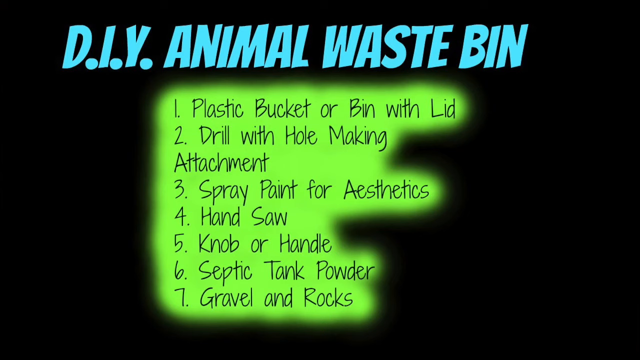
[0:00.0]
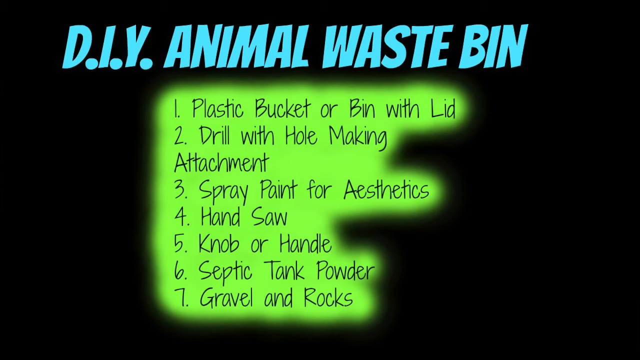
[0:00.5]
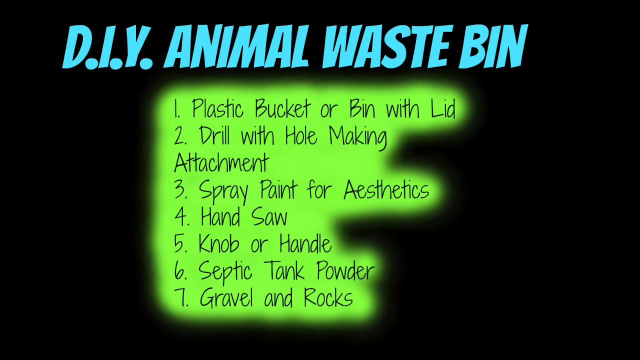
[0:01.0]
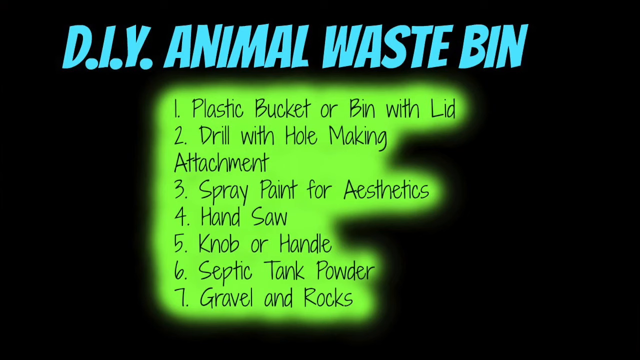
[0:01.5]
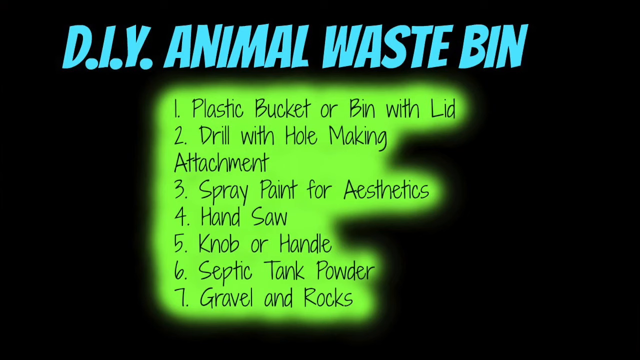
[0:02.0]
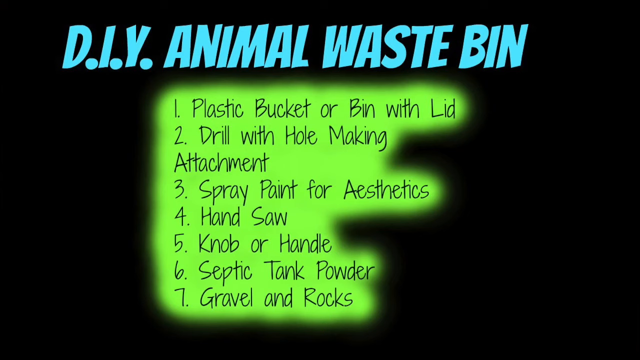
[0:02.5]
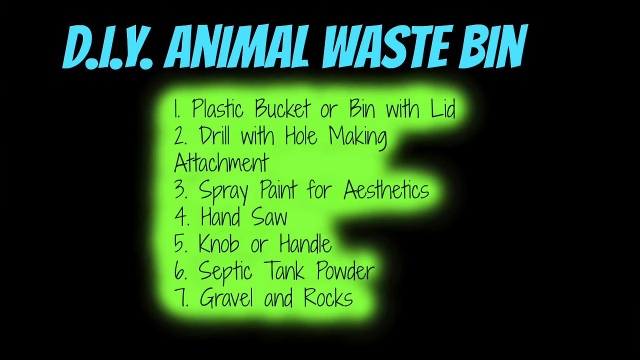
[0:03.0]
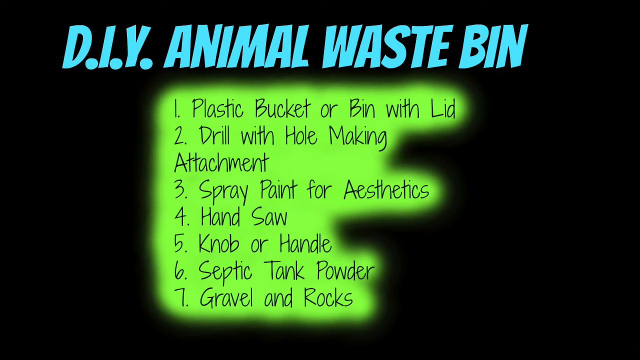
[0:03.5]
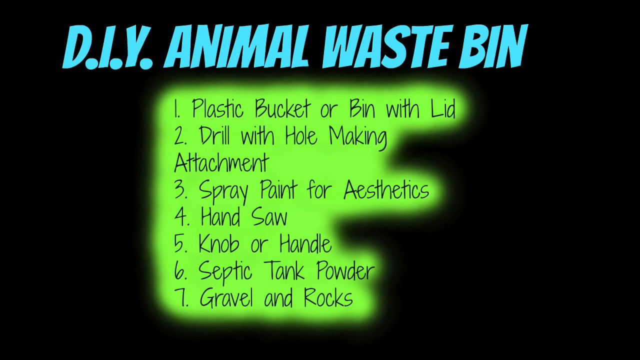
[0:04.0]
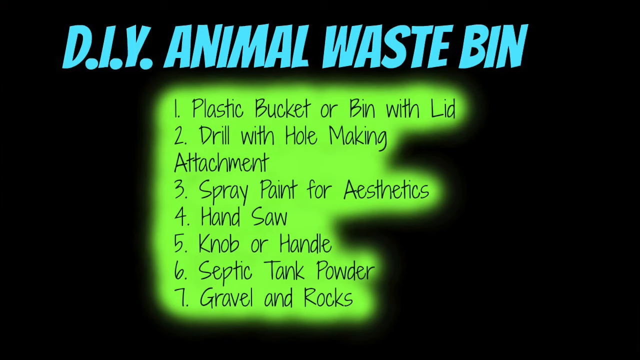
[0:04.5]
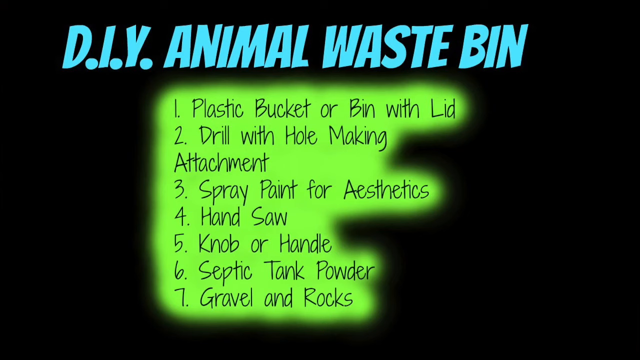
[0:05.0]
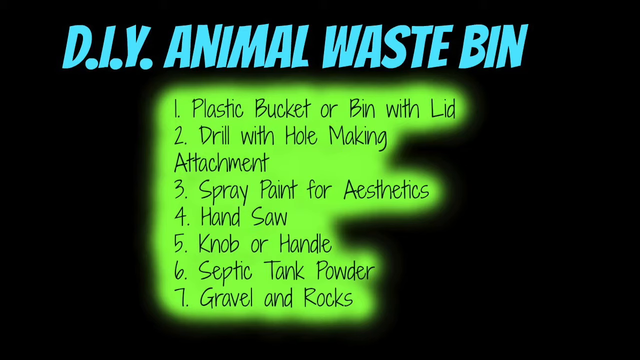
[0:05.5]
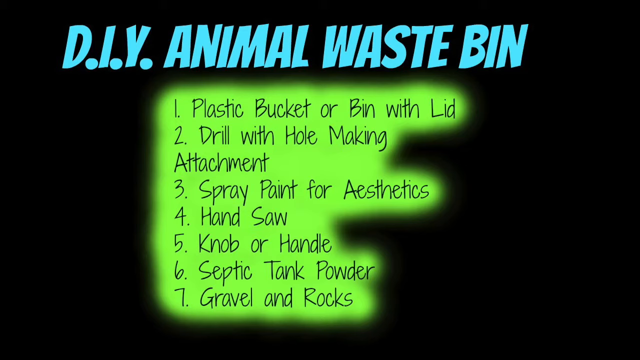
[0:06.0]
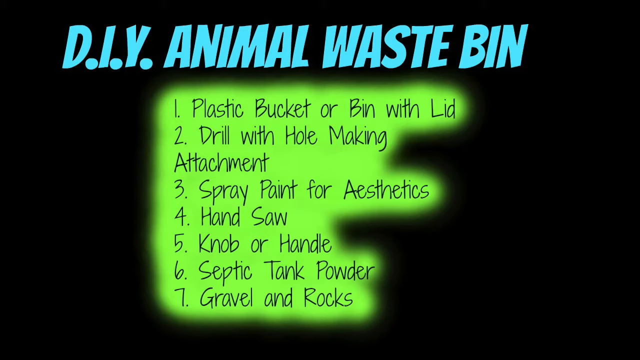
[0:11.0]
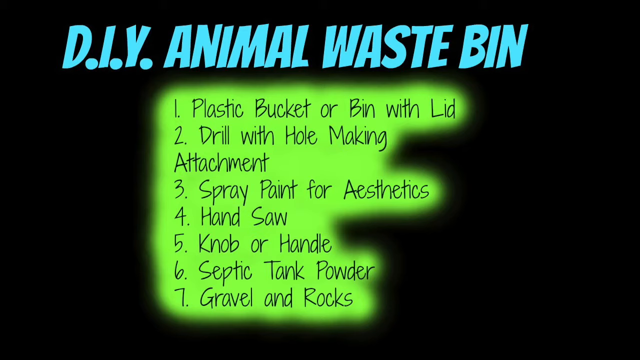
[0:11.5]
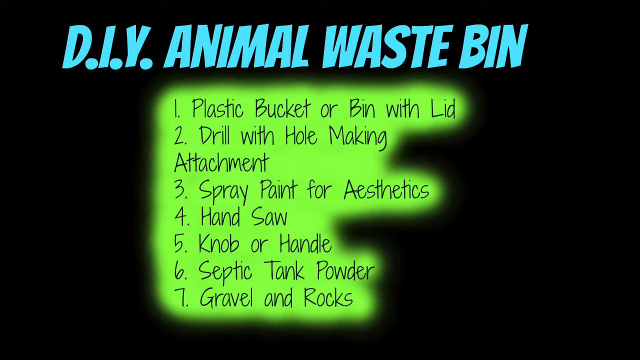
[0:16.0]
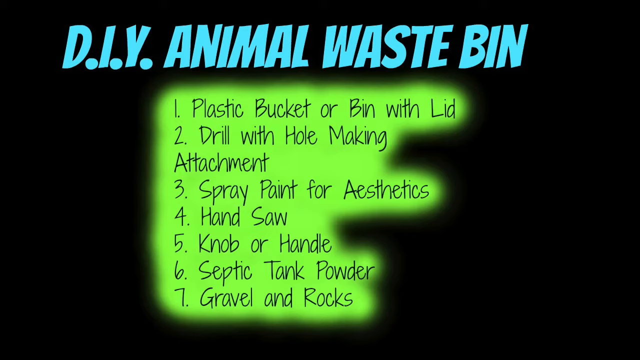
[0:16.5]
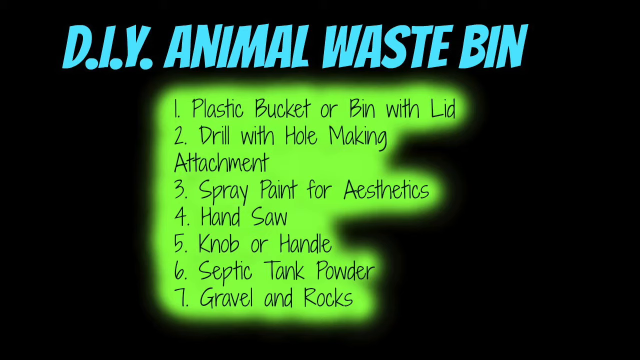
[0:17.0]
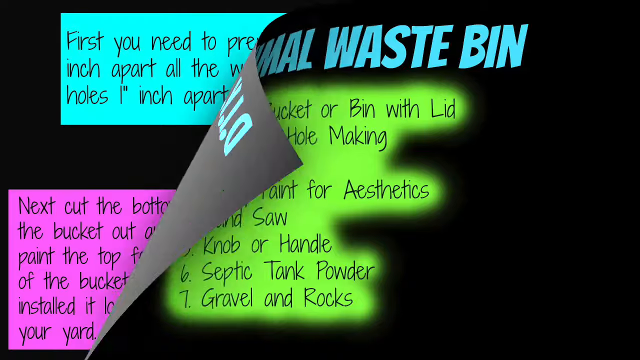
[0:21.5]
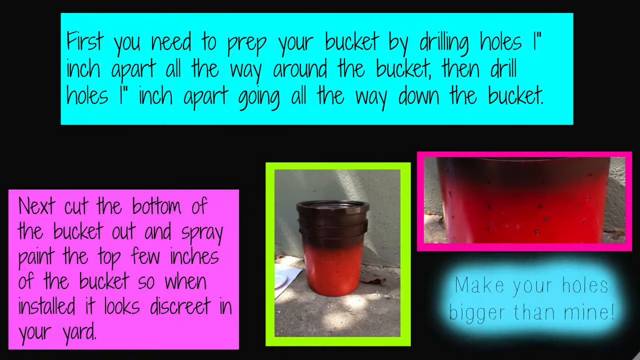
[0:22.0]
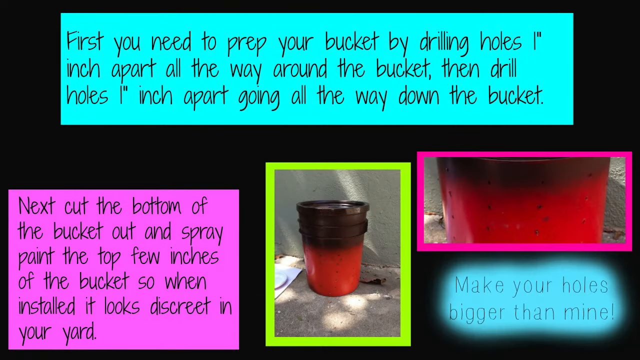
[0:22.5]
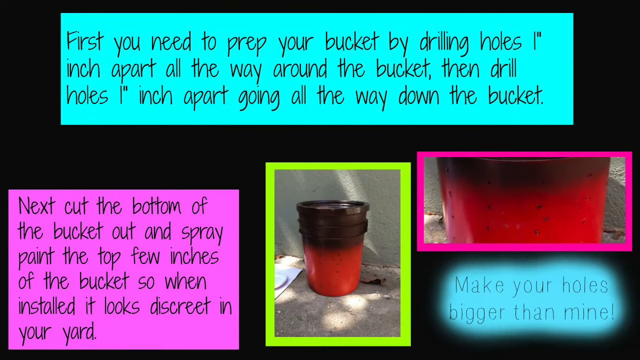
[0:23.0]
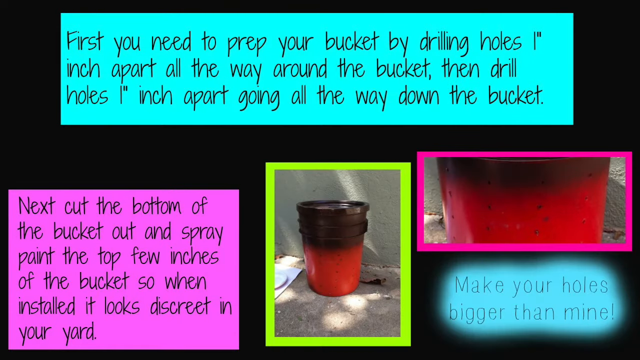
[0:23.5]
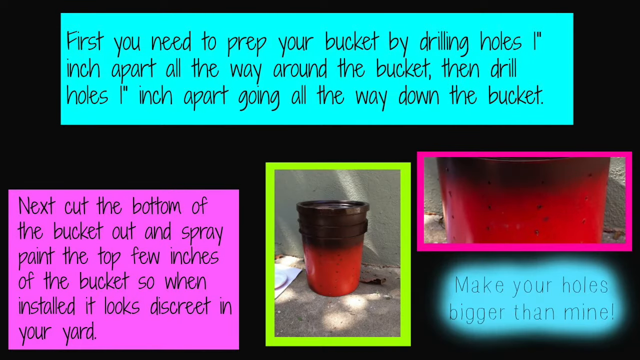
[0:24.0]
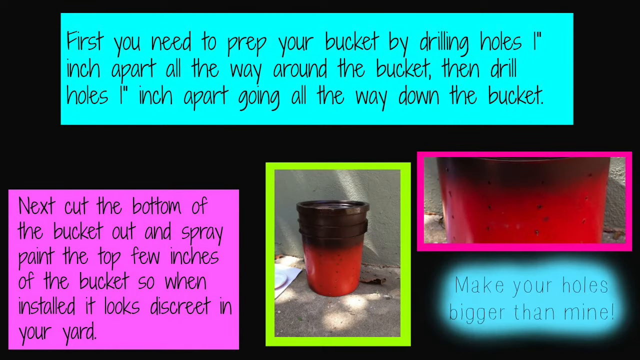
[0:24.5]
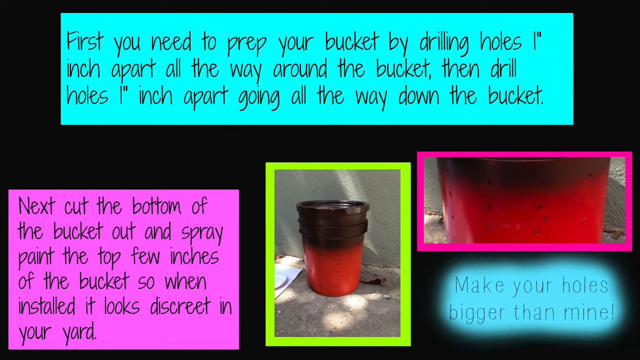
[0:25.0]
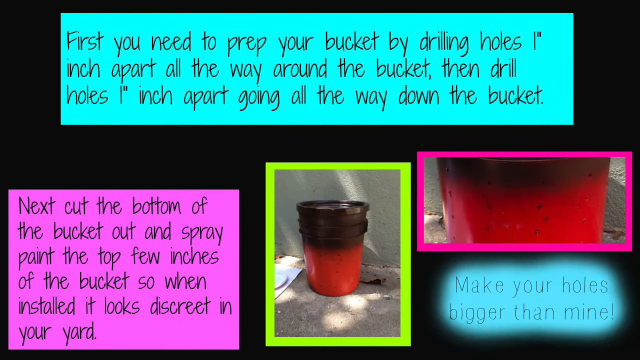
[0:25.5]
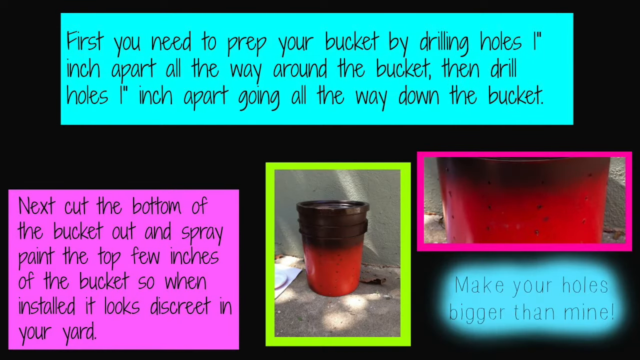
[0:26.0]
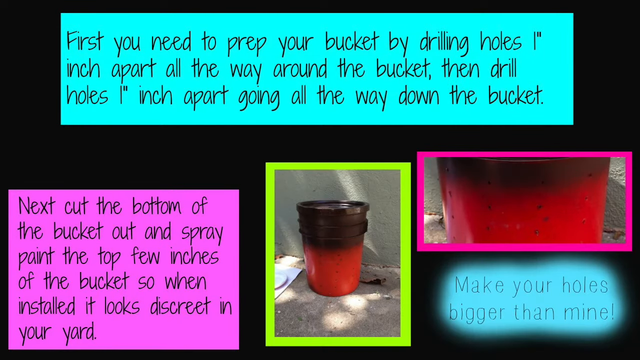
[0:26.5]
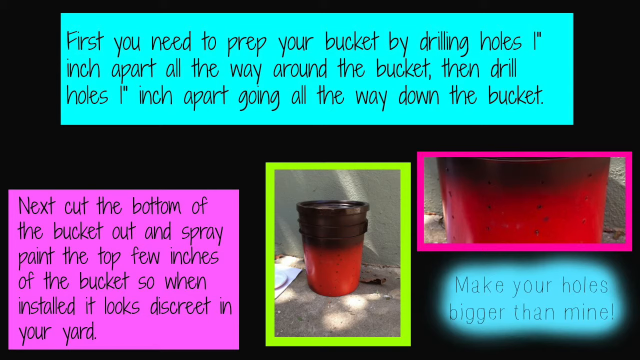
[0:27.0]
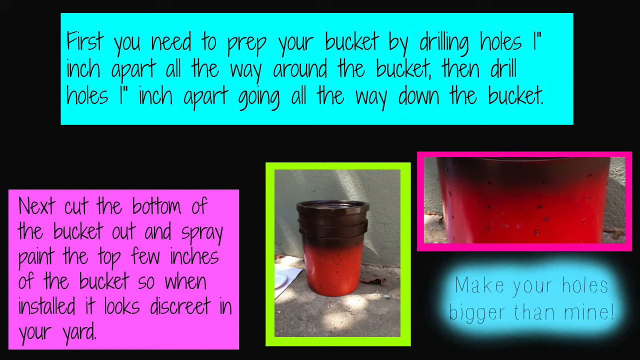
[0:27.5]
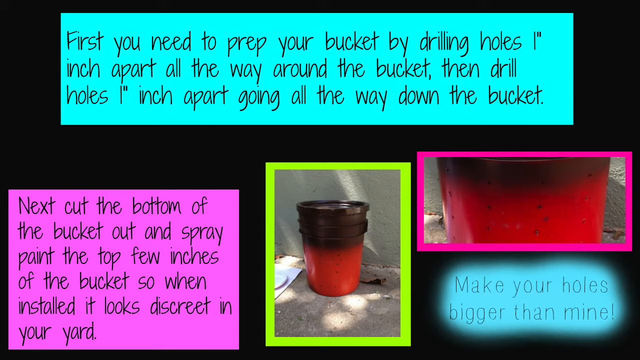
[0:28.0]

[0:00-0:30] A DIY video opens with "DIY animal waste bin" at the top in large blue capital letters. Below it is a list of seven points in black text on a bright green background, set against a plain black background. The list reads: "1. plastic bucket or bin with lid, 2. drill with hole making attachment, 3. spray paint for aesthetics, 4. hand saw, 5. knob or handle, 6. septic tank powder, 7. gravel and rocks." This appears to be the list of things needed to make the animal waste bin. Next comes a slide of instructions. On a blue background, text reads "first you need to prepare your bucket by drilling holes one inch apart all the way around the bucket and drill holes one inch apart going all the way down the bucket." In the bottom left, text reads "next cut the bottom of the bucket out and spray paint the top few inches of the bucket so when installed it looks discreet in your yard." Toward the bottom right are two photos: one of the bin with a spray-painted top, and another on the right showing holes in the bucket. In the bottom right, text reads "make your holes bigger than mine."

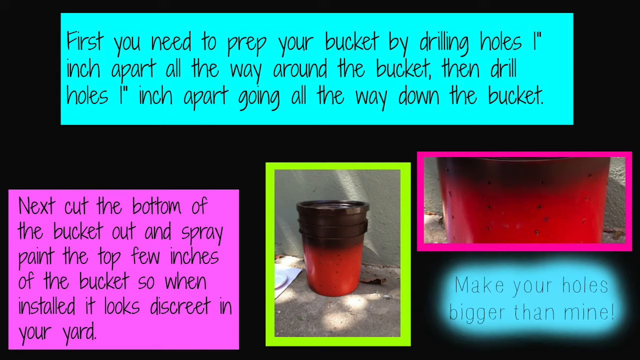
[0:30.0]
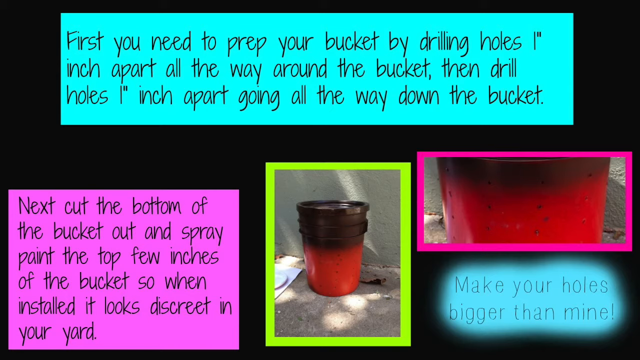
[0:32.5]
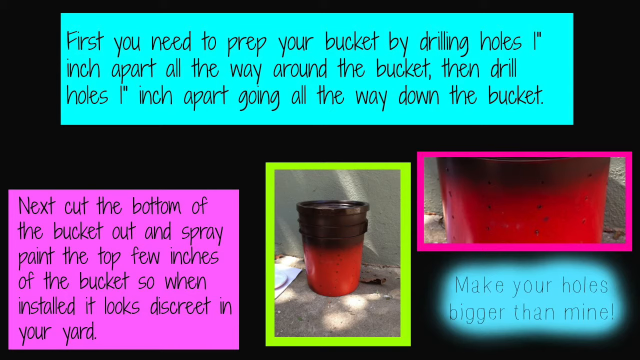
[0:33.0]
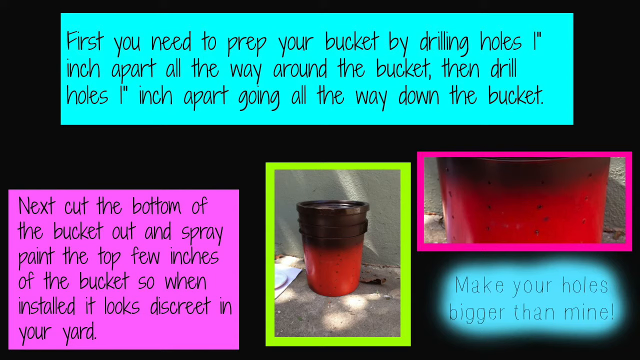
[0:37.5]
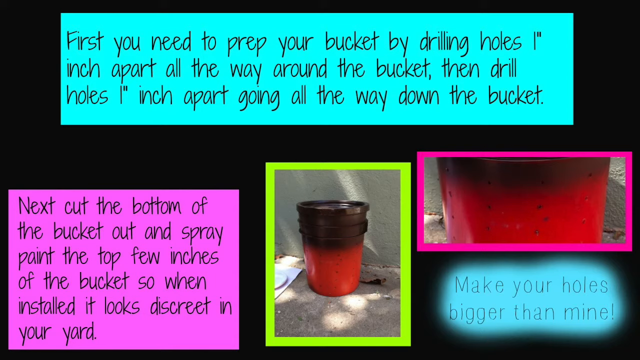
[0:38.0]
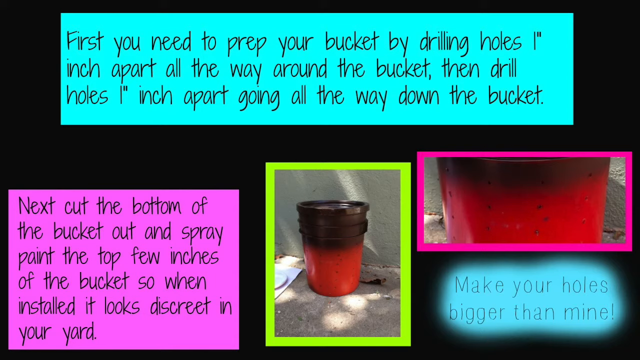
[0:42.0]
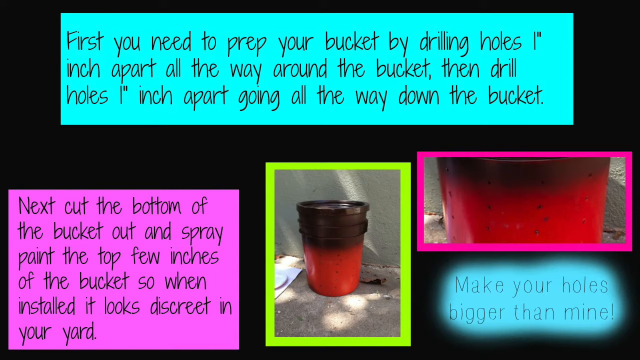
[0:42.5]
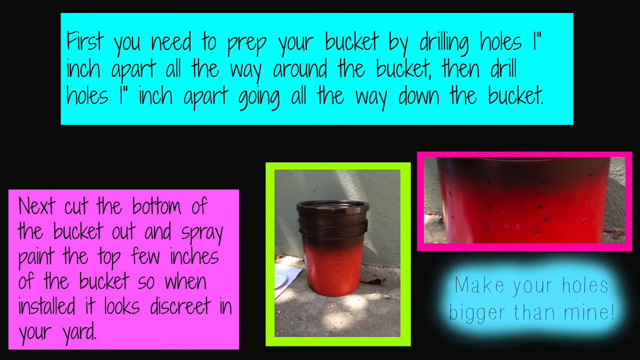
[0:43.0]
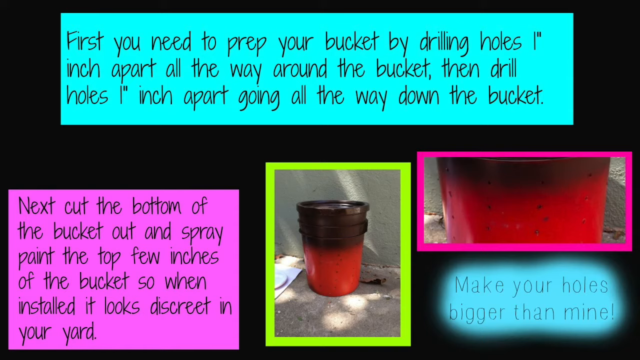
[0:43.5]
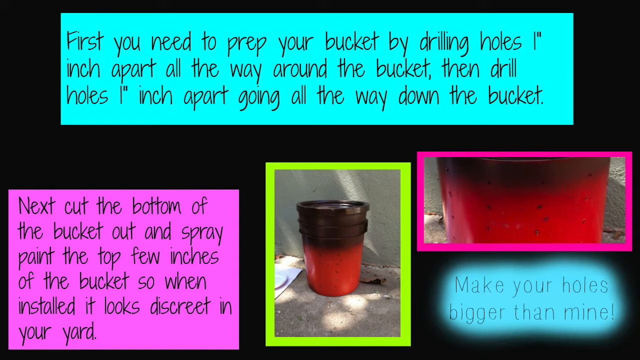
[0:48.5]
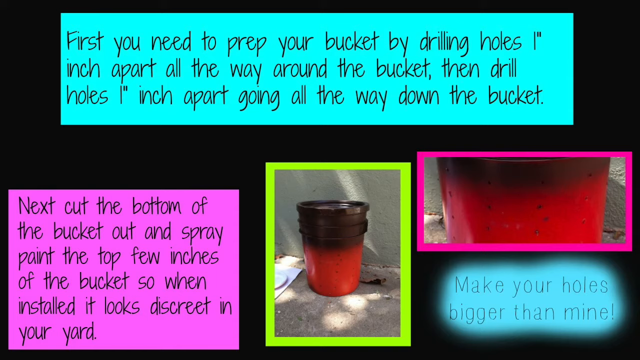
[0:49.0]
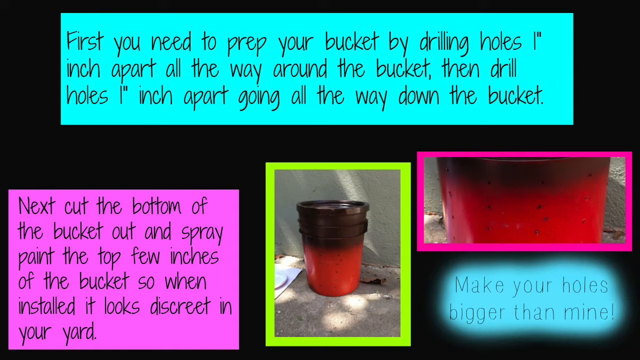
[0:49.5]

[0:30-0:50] The same static image stays on screen. It is made up of five rectangular boxes. At the top is a block of text on a blue background, and in the bottom left is a block of text on a pink background. A photo in the bottom middle has a green outline and shows a red bucket spray-painted black at the top, resting on a concrete surface with a wall in the background. Another photo, in the right middle of the page, has a pink outline and shows the red bucket with holes in it. In the bottom right, text reads "make your holes bigger than mine!"